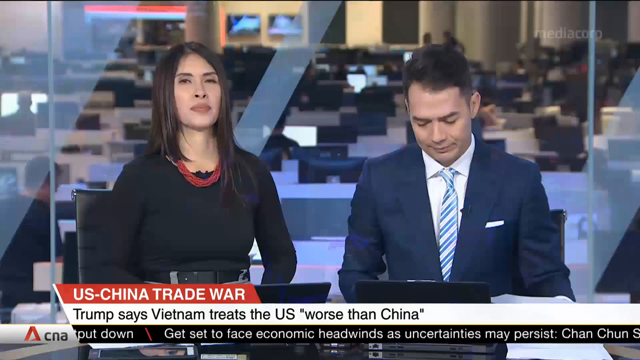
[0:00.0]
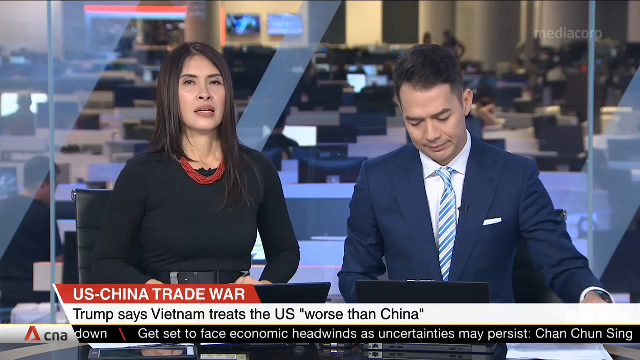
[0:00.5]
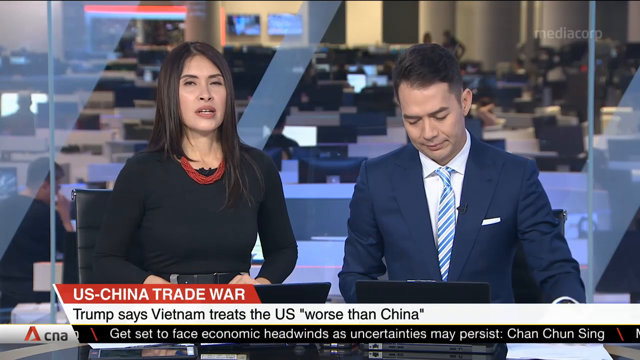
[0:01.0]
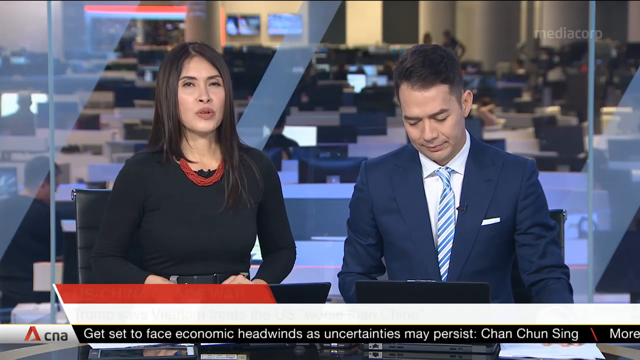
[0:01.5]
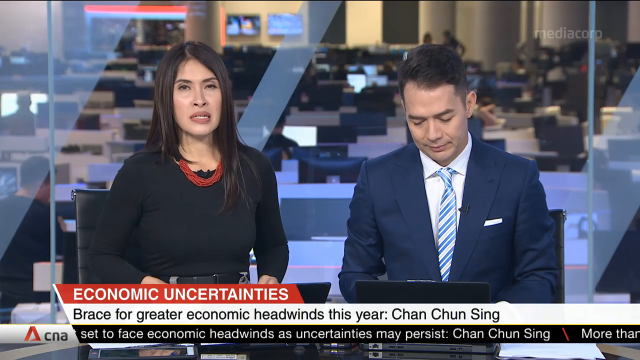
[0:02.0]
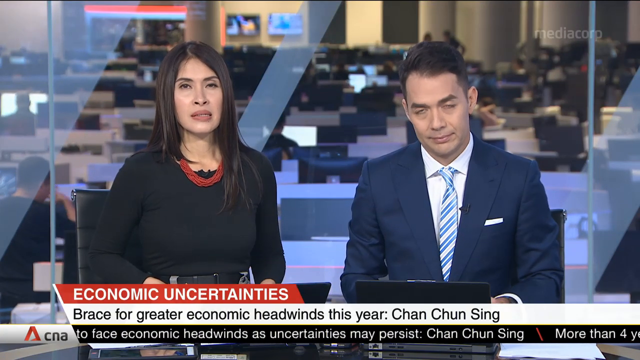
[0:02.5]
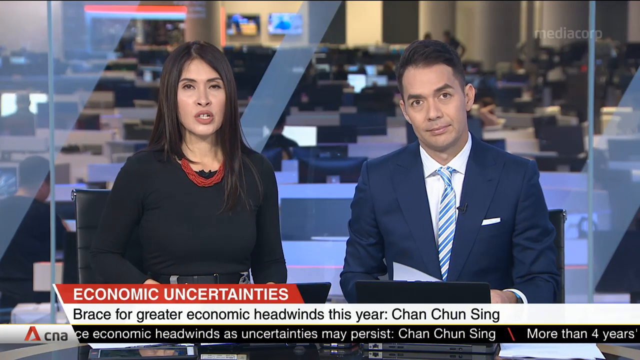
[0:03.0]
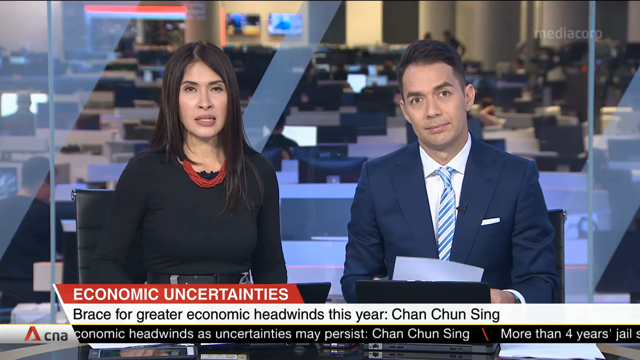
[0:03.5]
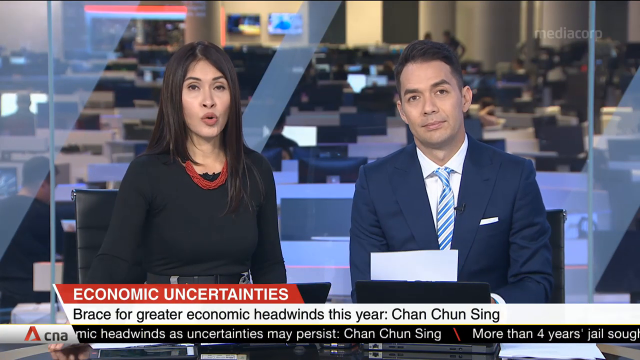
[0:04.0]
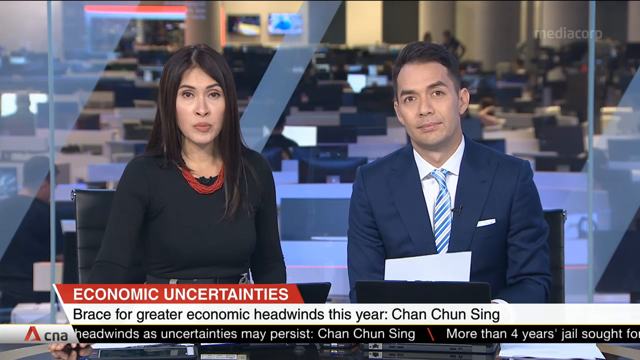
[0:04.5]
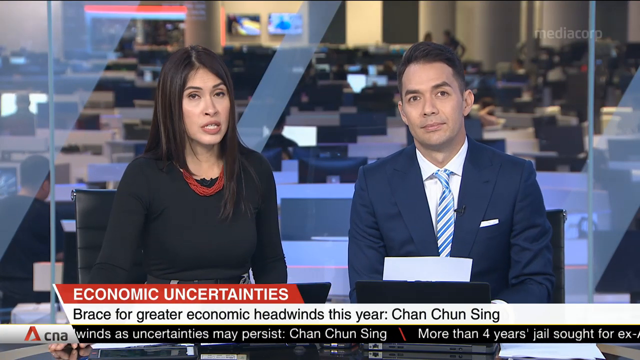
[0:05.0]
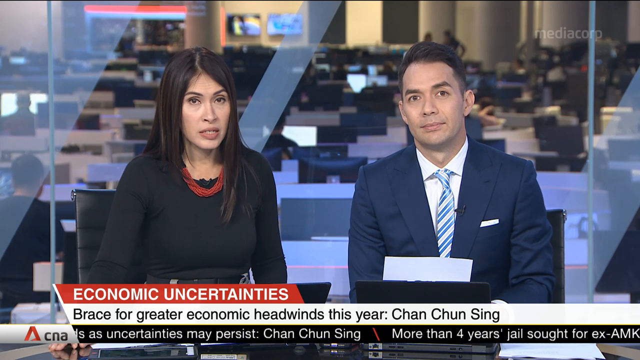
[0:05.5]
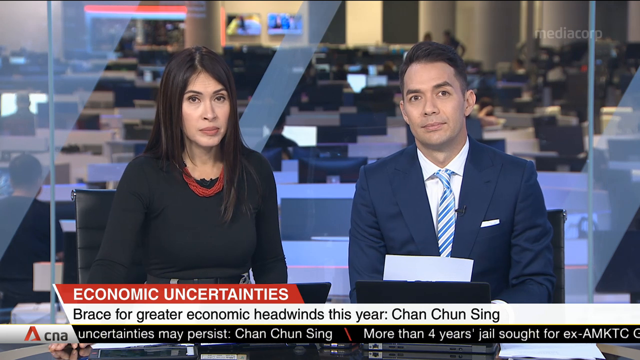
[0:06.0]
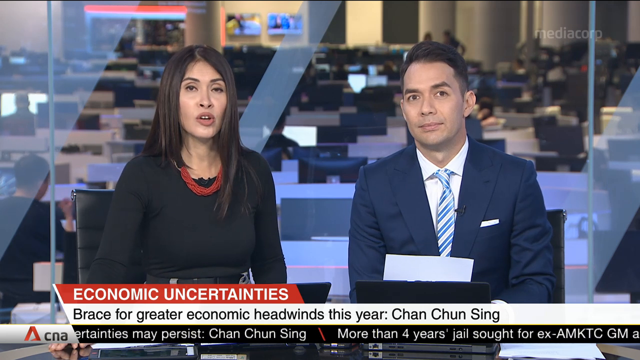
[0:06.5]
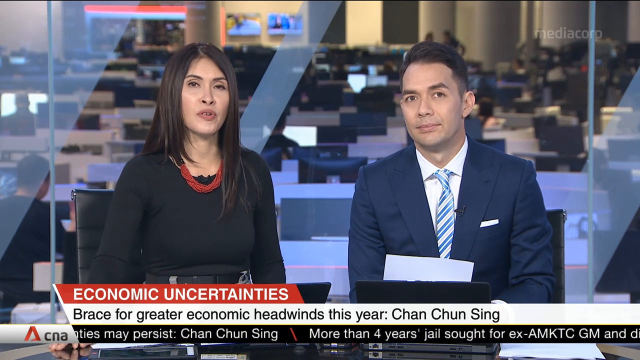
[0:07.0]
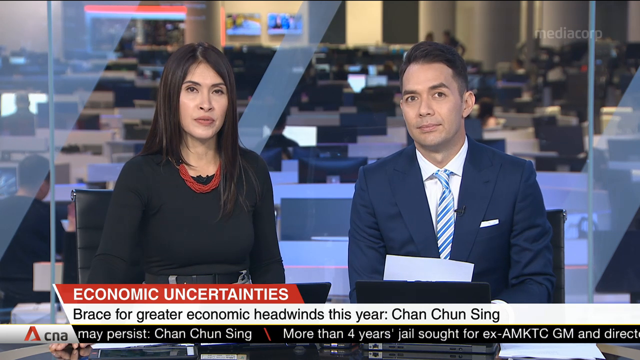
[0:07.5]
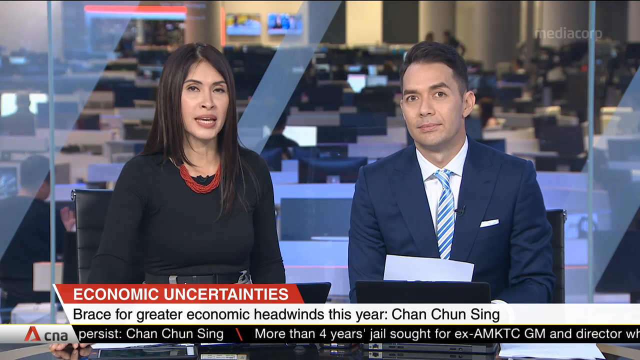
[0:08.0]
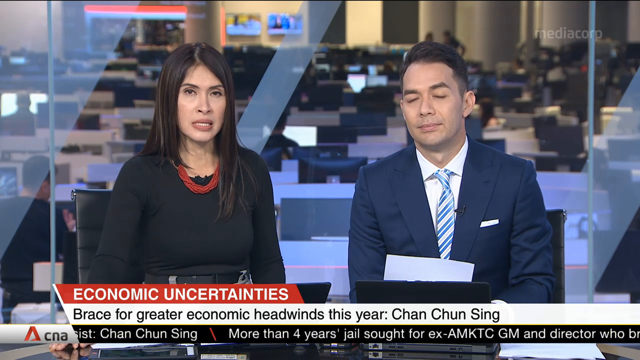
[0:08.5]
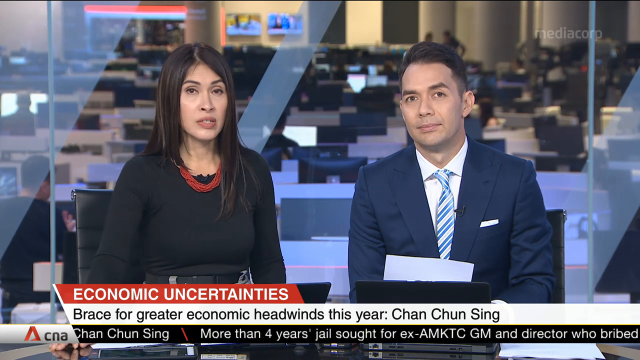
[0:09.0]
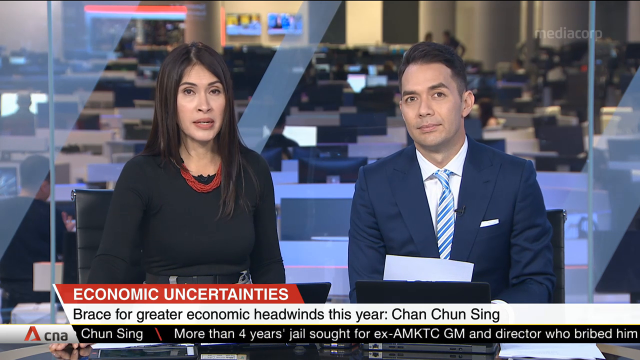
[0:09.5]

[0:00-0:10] The scene is a newsroom, a modern television news studio. Two presenters sit in front of a glass background, and behind it are rows and rows of computers and desks where journalists can sit, with some screens on the wall of that room. This background is slightly out of focus, while the two presenters sit in front of the camera. On the left is a female presenter with straight, shoulder-length brown hair, wearing a black top and a red beaded and braided necklace. On the right sits a male presenter in a navy blue suit, white shirt and blue and white striped tie; he has dark brown hair. They both look to be in their 30s. A caption runs along the bottom of the screen: the first line, in white font on a red background, reads "US-China trade war". Beneath it, a white strap carries black text reading "Trump says Vietnam treats the US worse than China". Below that is a black strap with a ticker scrolling headlines from right to left across the screen. Only the female anchor speaks.